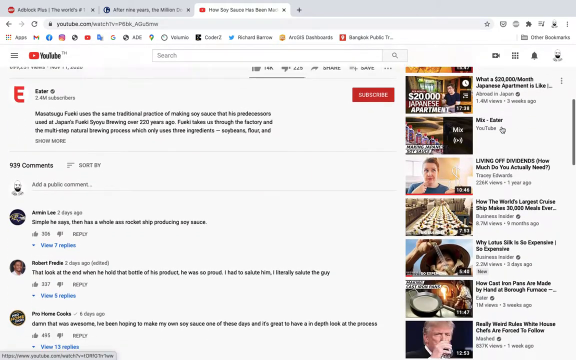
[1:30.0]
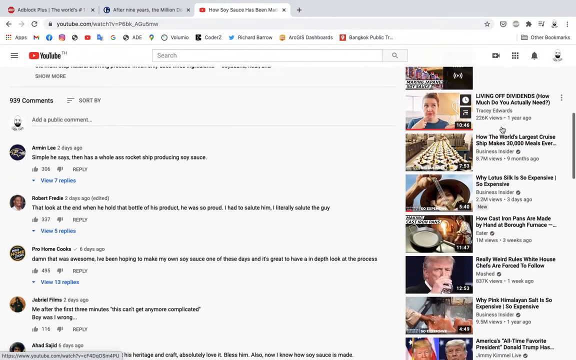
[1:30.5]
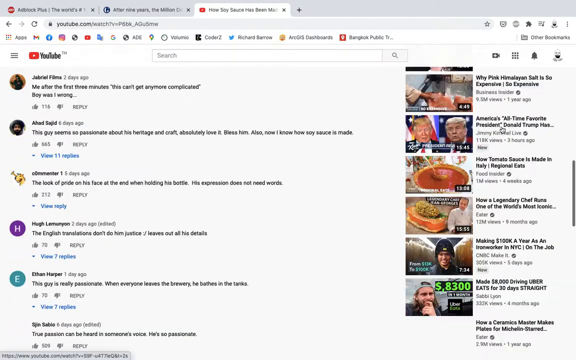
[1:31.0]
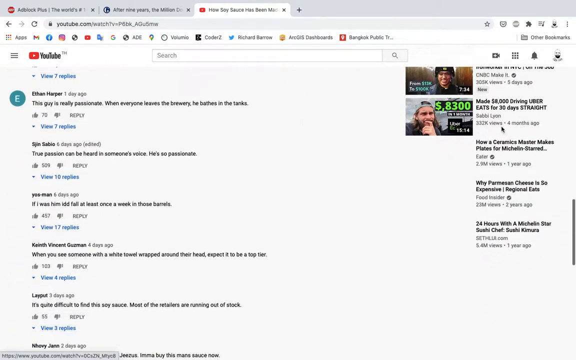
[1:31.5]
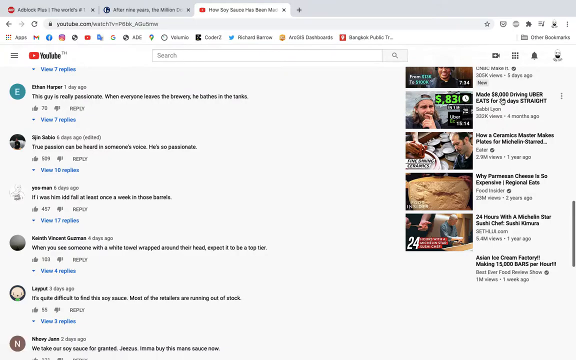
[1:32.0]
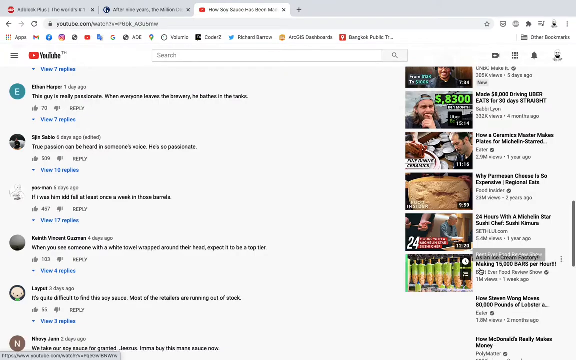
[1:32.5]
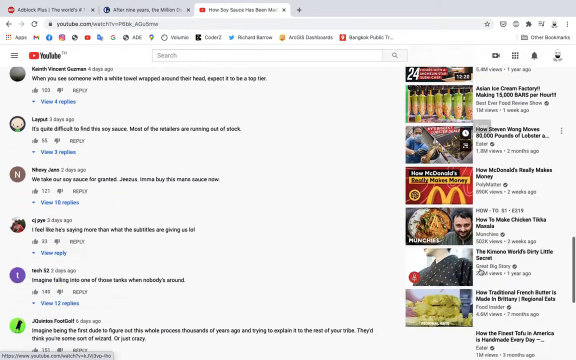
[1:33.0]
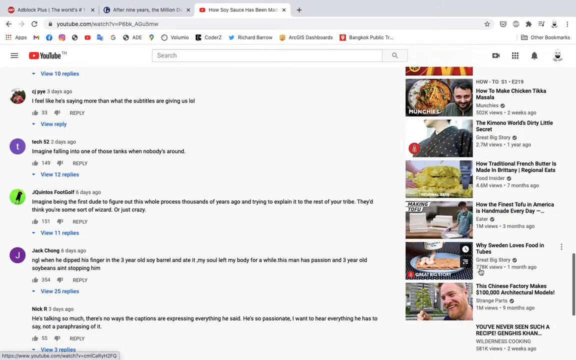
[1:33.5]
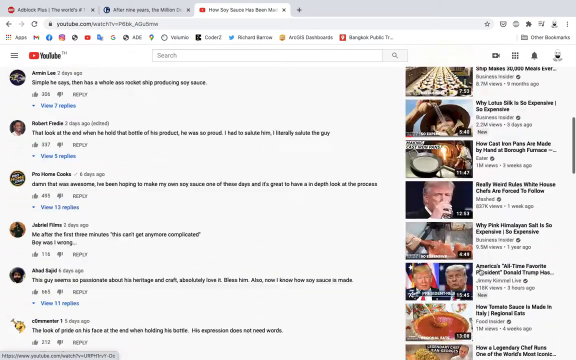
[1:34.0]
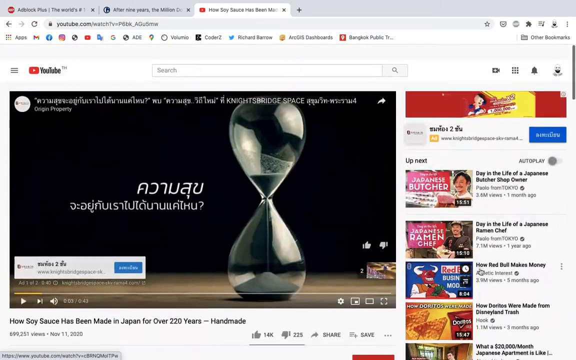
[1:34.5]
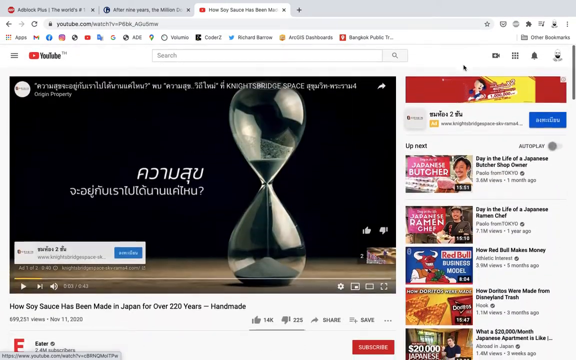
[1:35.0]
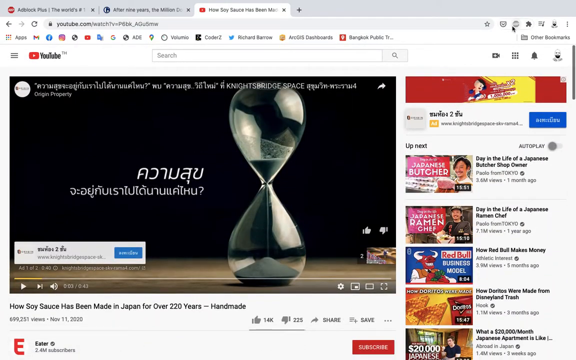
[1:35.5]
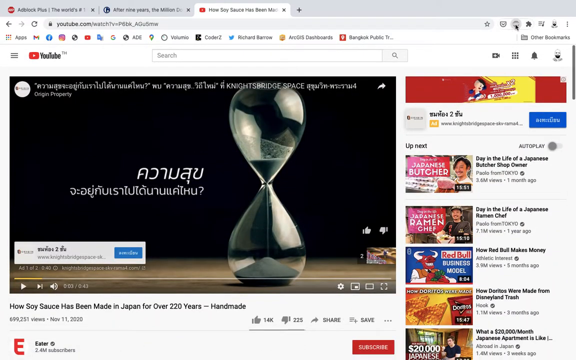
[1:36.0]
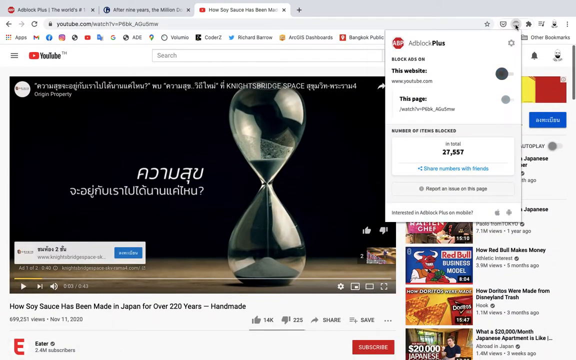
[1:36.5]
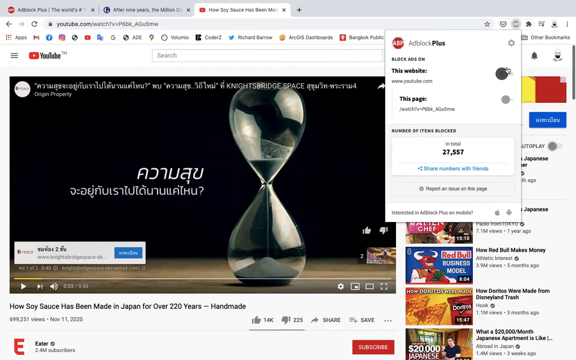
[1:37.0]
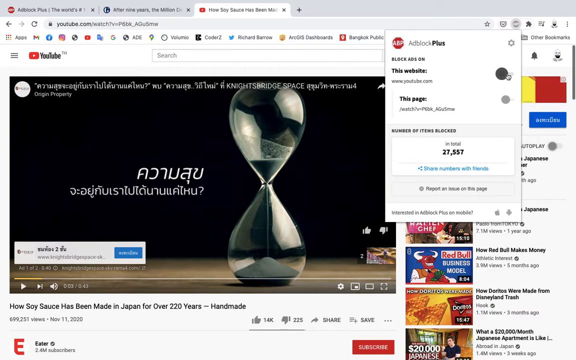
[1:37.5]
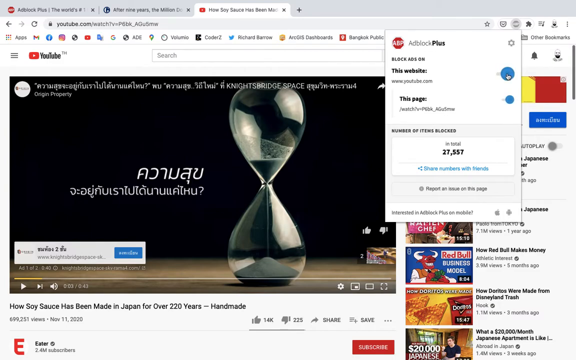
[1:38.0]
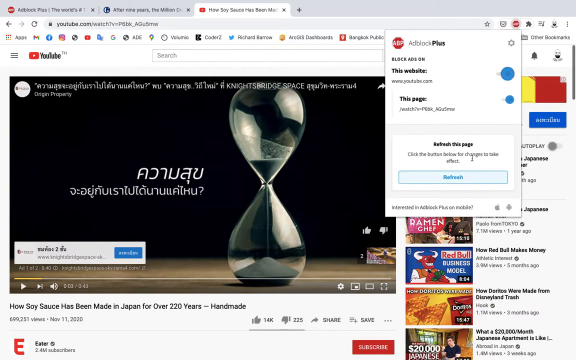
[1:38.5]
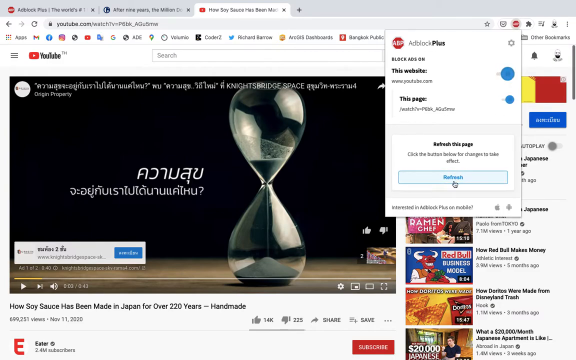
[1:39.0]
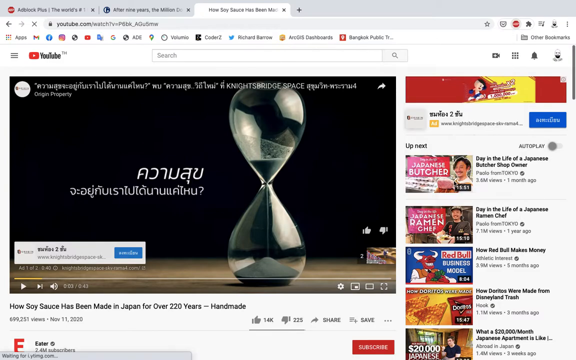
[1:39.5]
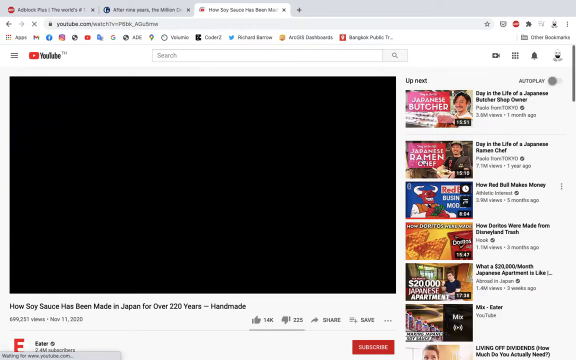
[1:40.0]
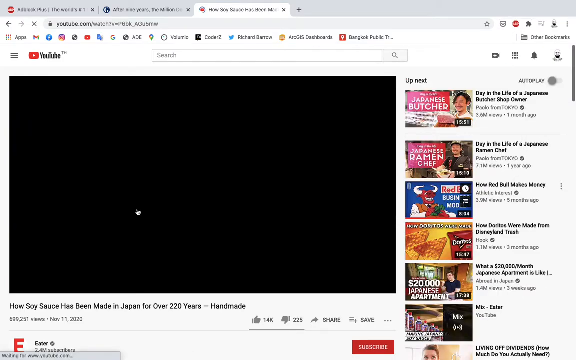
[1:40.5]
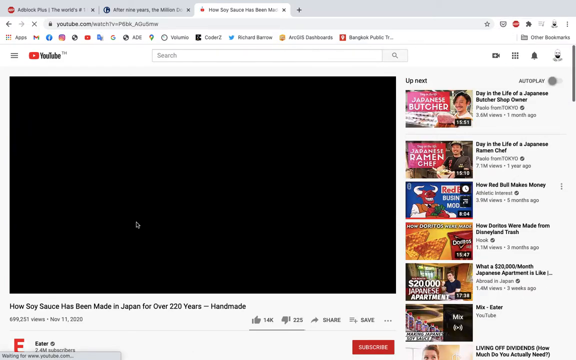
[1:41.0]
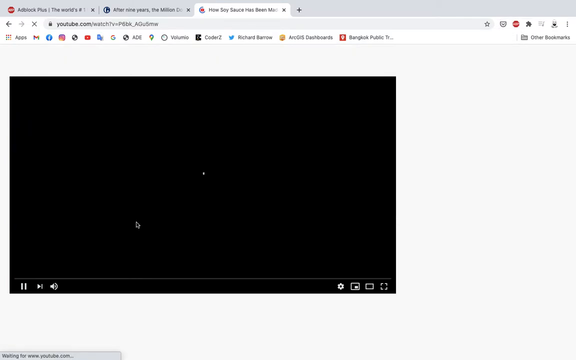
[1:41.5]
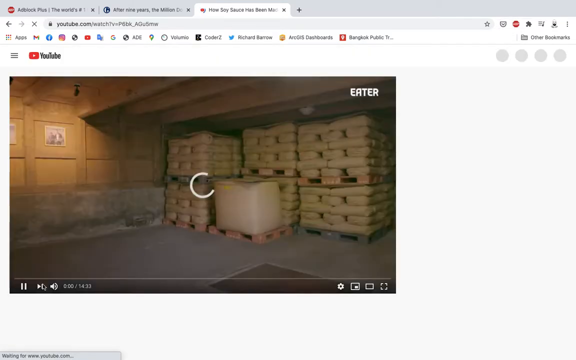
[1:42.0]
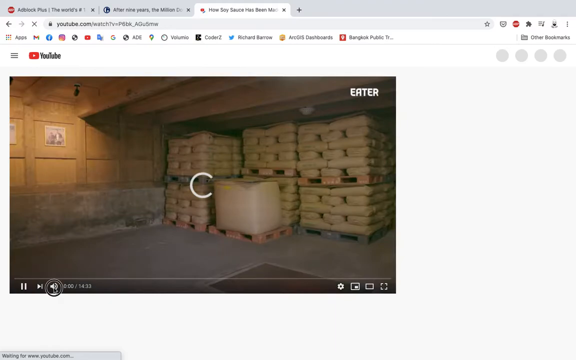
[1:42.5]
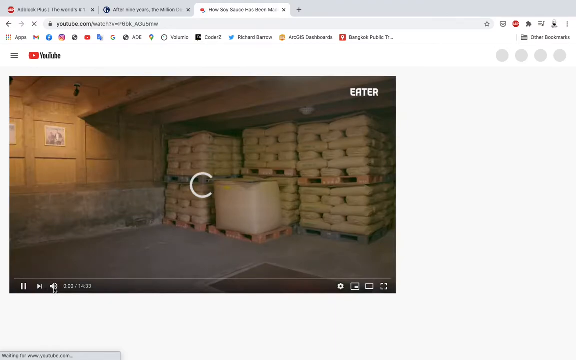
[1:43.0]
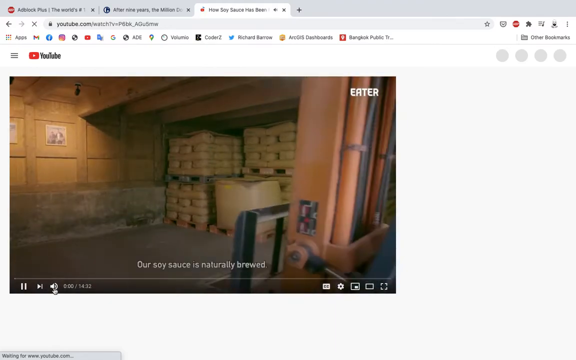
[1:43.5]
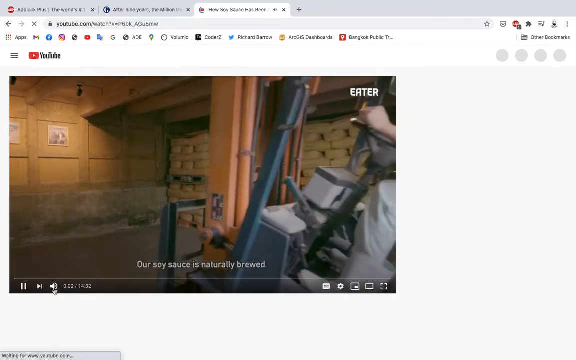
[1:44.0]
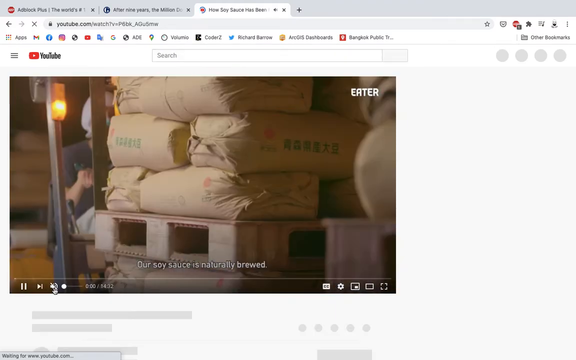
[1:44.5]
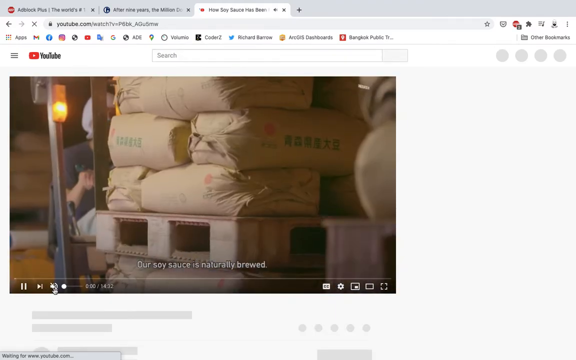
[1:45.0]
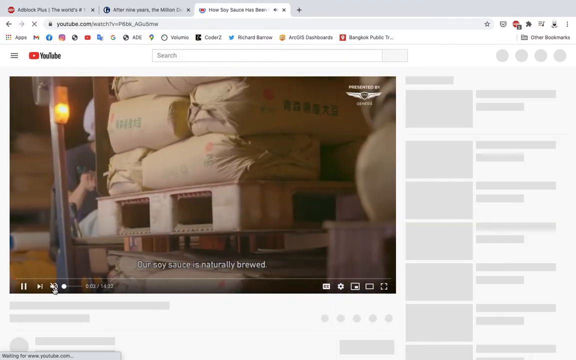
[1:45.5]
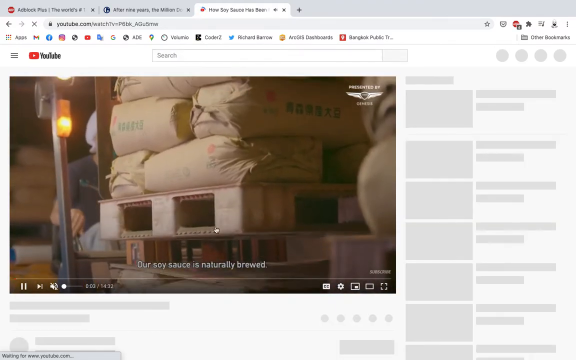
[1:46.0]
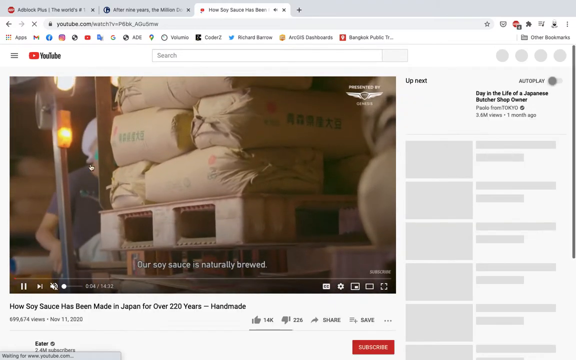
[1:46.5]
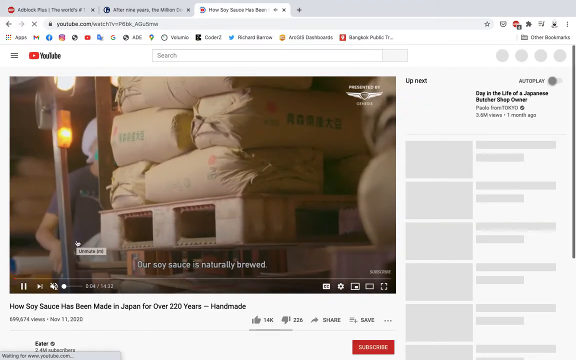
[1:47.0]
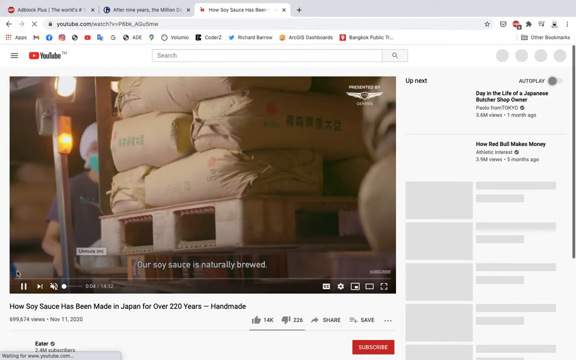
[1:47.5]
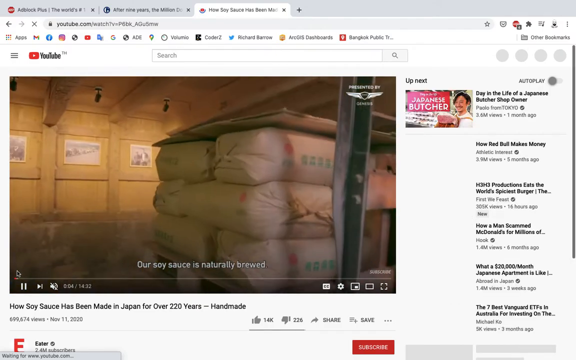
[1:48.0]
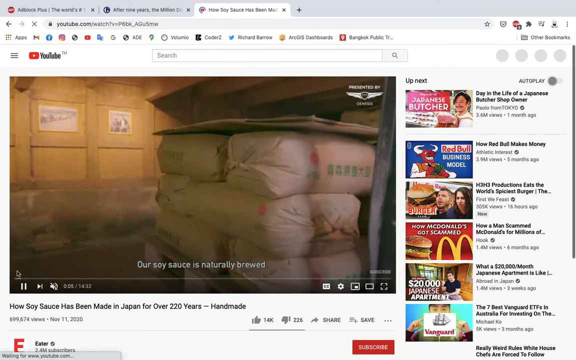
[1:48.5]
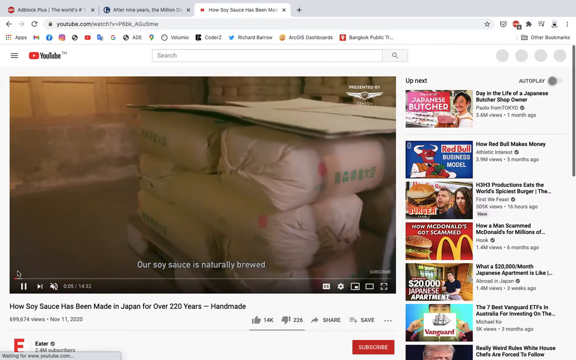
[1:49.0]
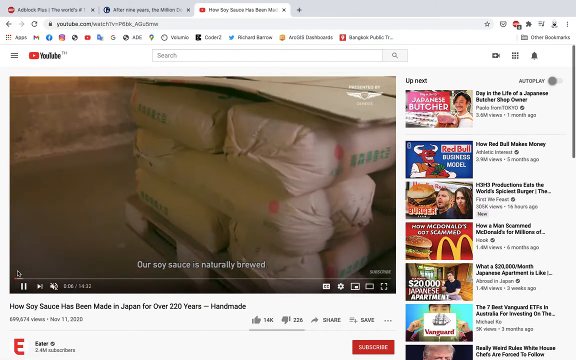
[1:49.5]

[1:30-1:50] The user scrolls through the many YouTube comments, returns to the top of the page, and once again clicks the AdBlock Plus Chrome extension, a small red icon in the top right of the browser with the letters A-B-P. The extension again opens a dialog below the extension toolbar in the Chrome browser. The dialog shows the AdBlock Plus logo and the words "AdBlock Plus", with a settings cog at its very top right. It shows that ads are blocked on this website, with a blue toggle indicating on, and a sub-option for this page showing the trailing URL of the YouTube video, with a blue toggle also set to on. Below, in a smaller white box within the larger dialog, is the text "refresh this page. Click the button below for changes to take effect." followed by the light blue refresh button outlined in a slightly darker blue, with the word "refresh" in that same darker blue. At the bottom of the dialog is again the text "interested in AdBlock Plus on mobile" with the Apple and Android logos. The user clicks refresh, which closes the dialog and reloads the video. The mouse cursor then points to the video, showing that the ads have been removed from on top of it.